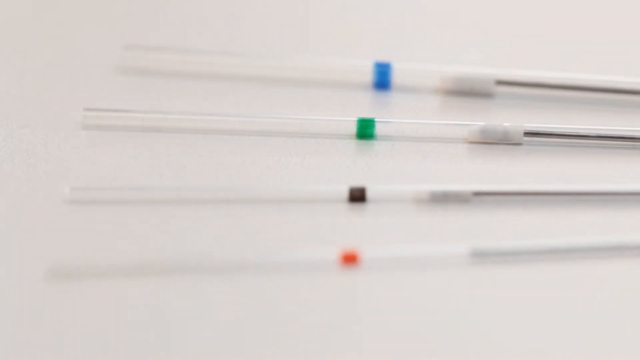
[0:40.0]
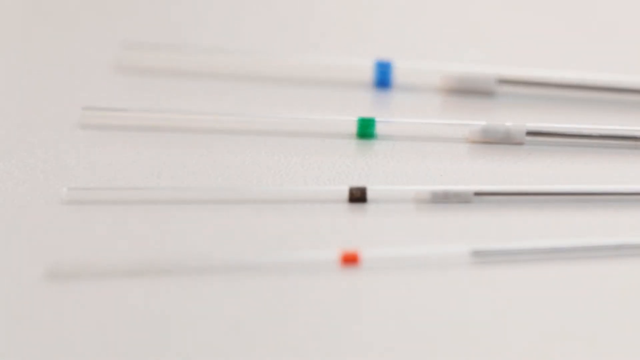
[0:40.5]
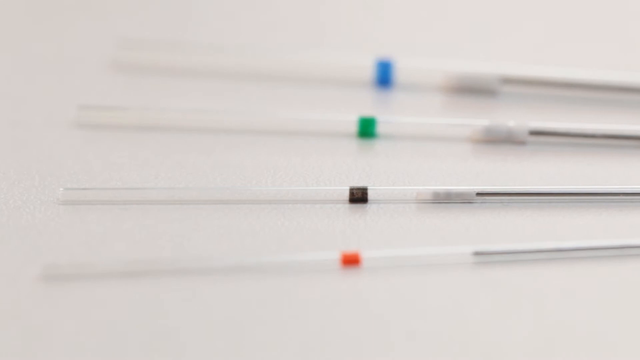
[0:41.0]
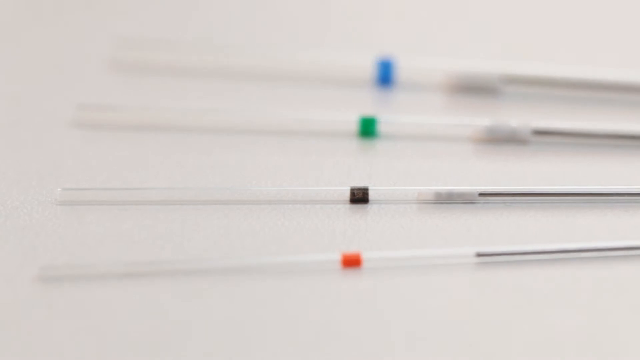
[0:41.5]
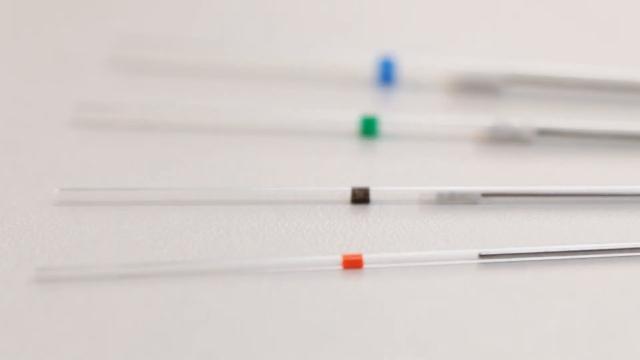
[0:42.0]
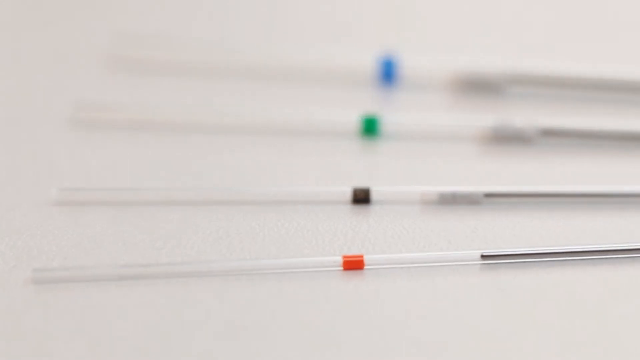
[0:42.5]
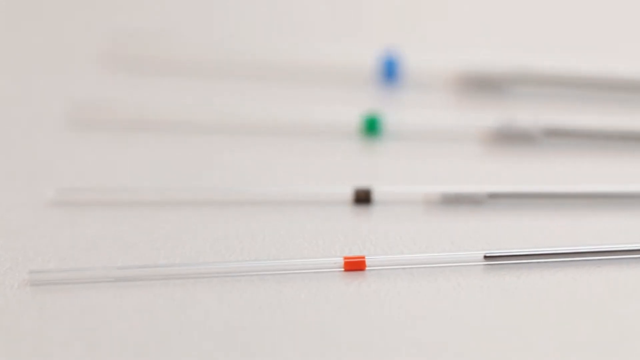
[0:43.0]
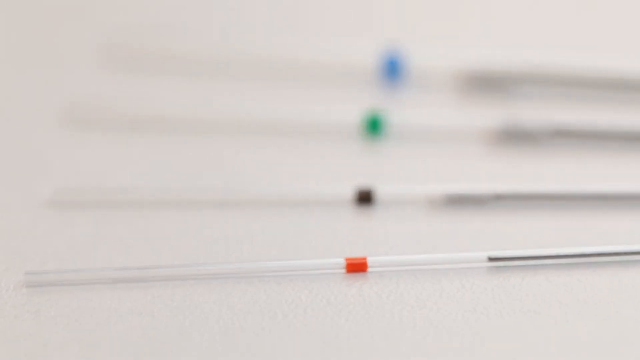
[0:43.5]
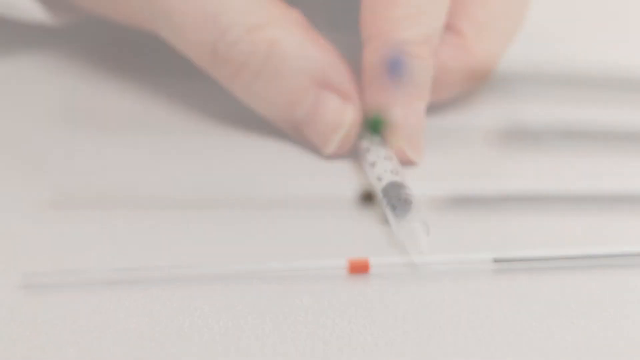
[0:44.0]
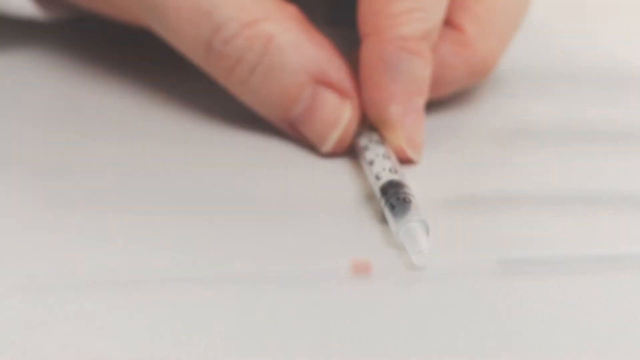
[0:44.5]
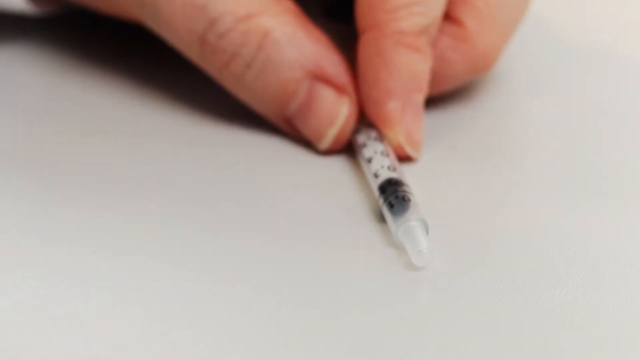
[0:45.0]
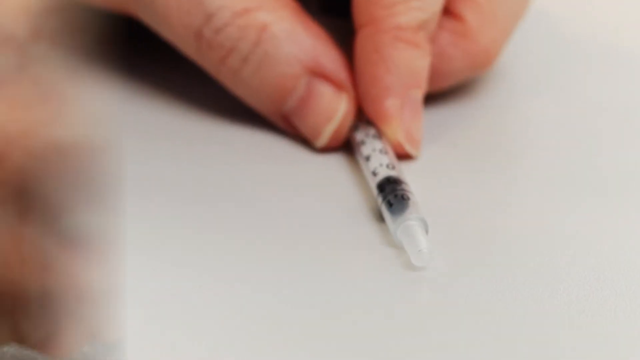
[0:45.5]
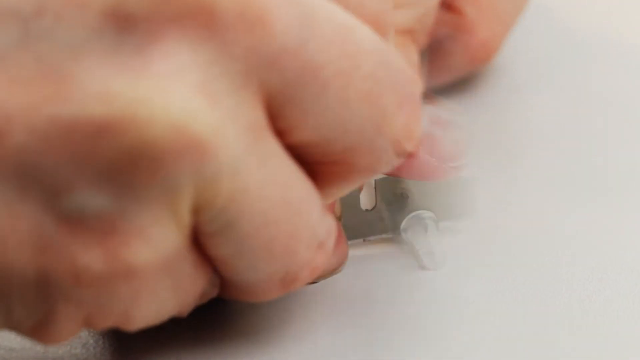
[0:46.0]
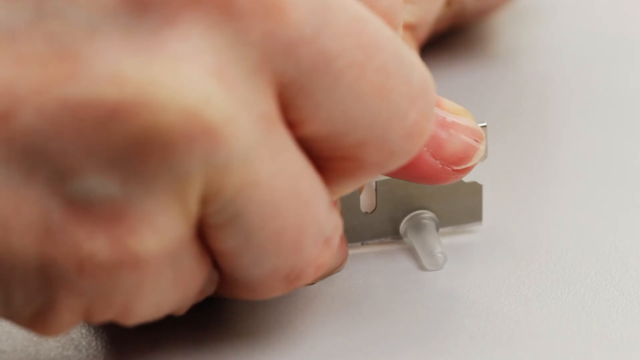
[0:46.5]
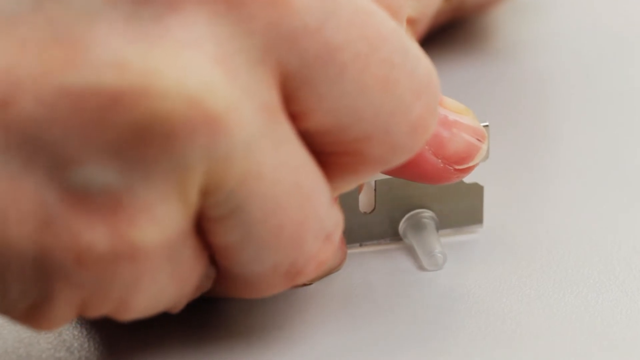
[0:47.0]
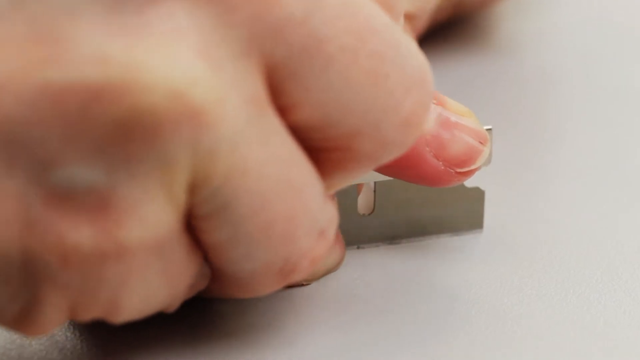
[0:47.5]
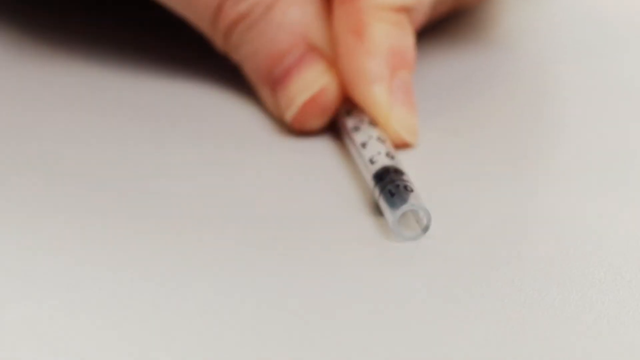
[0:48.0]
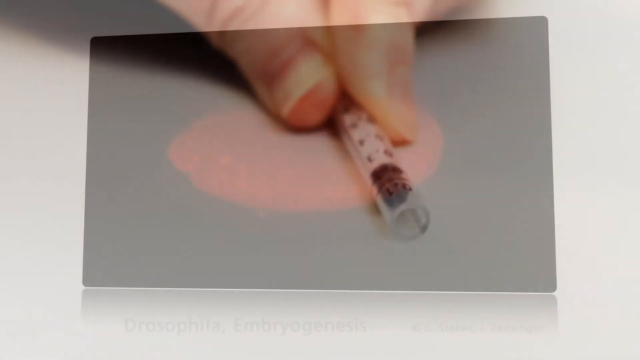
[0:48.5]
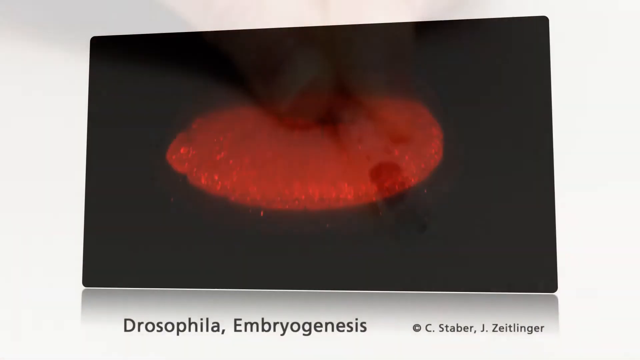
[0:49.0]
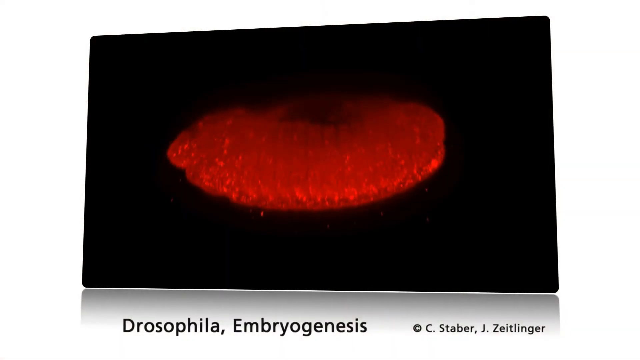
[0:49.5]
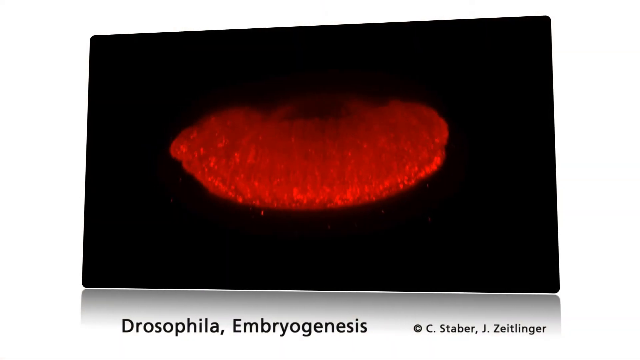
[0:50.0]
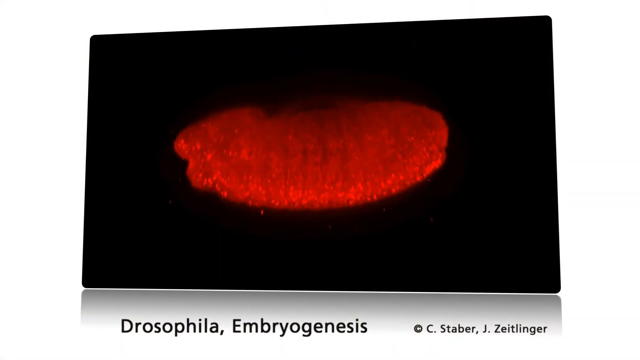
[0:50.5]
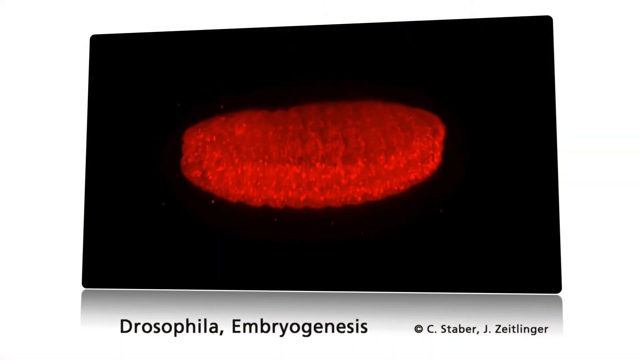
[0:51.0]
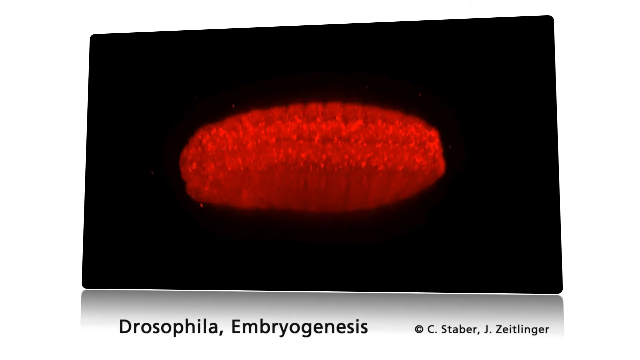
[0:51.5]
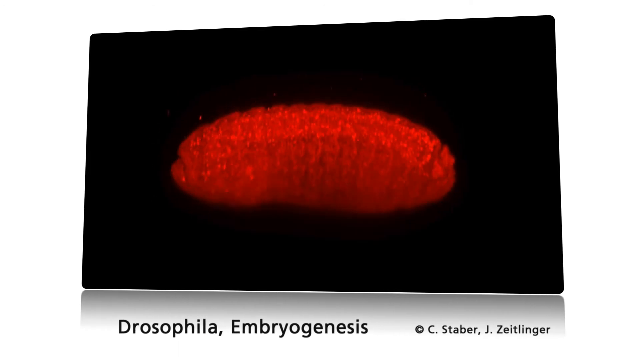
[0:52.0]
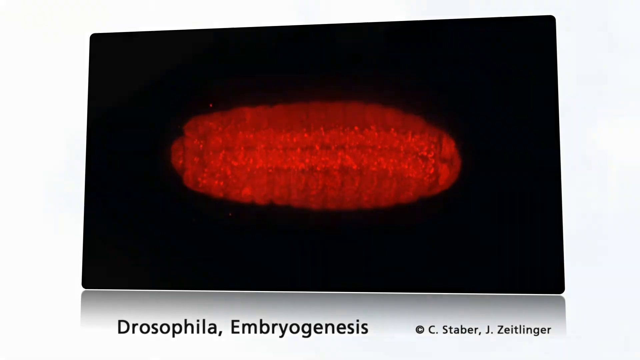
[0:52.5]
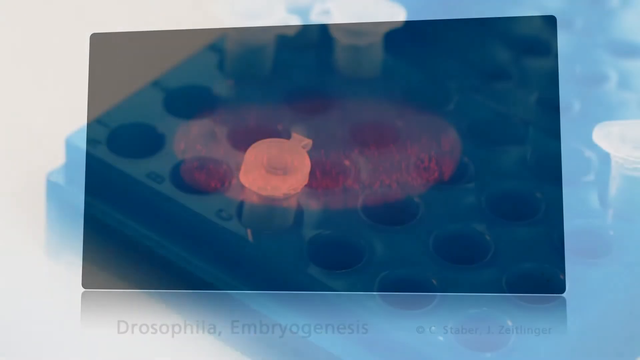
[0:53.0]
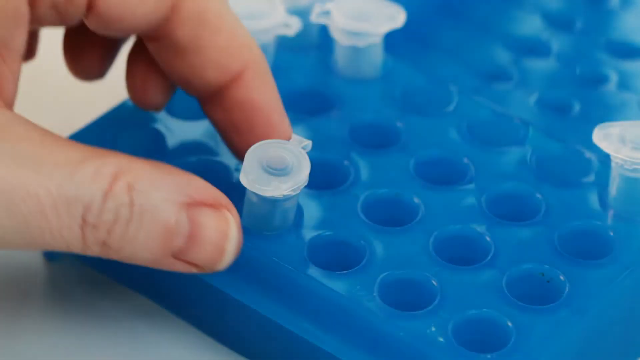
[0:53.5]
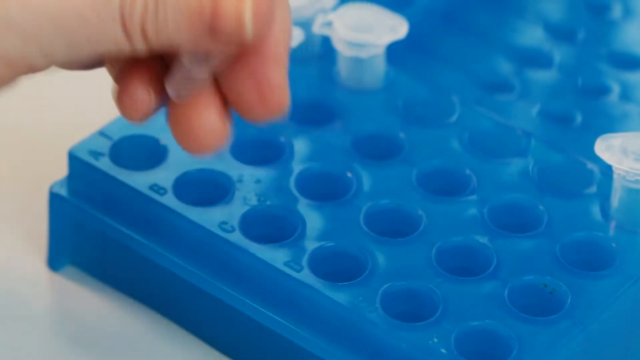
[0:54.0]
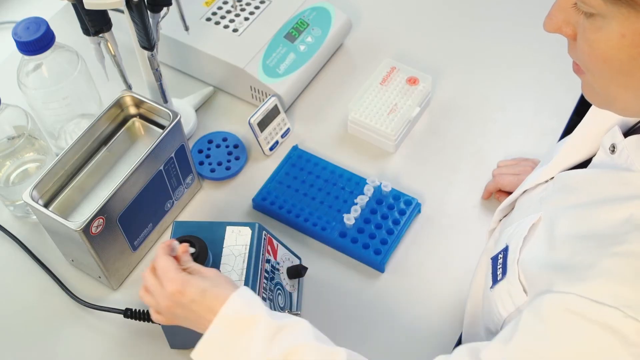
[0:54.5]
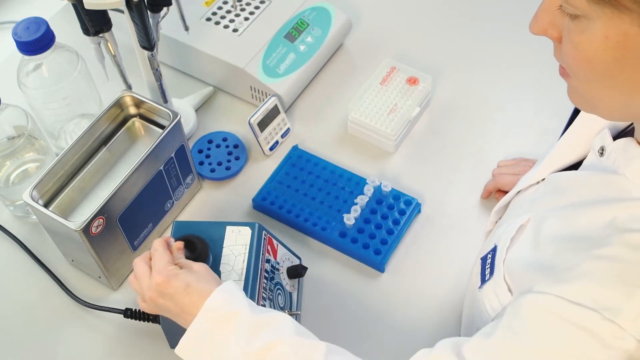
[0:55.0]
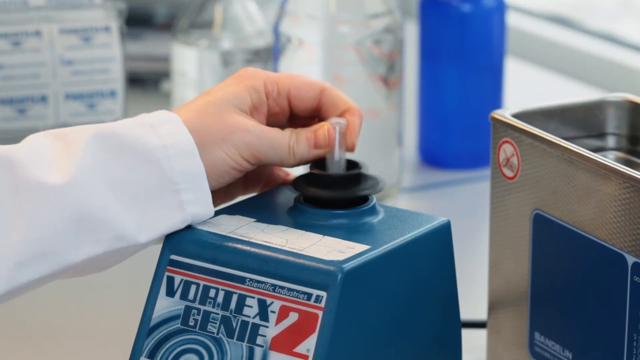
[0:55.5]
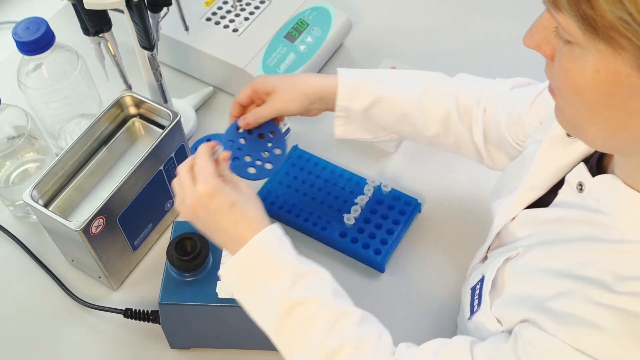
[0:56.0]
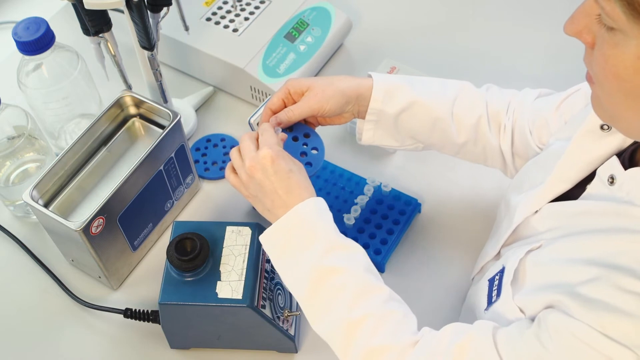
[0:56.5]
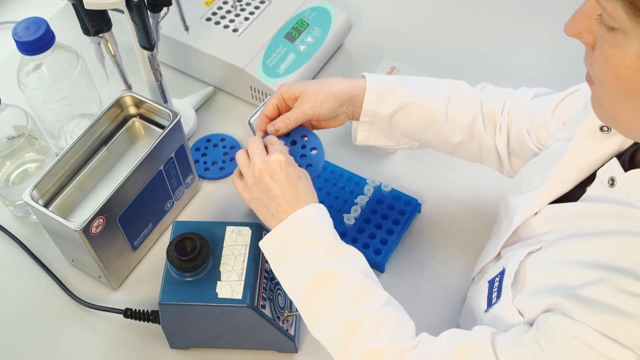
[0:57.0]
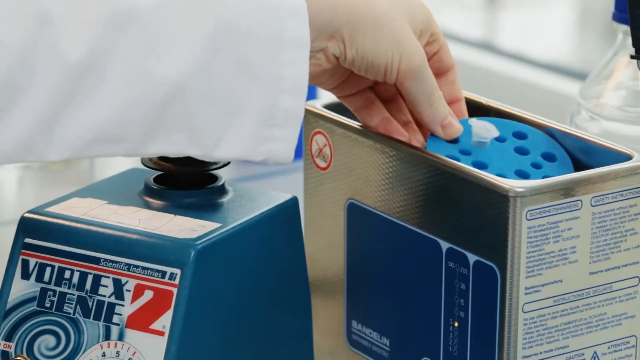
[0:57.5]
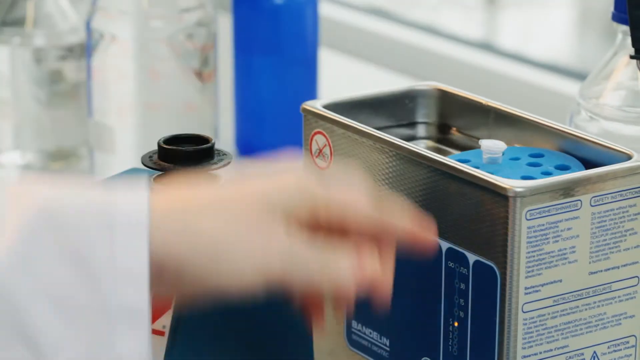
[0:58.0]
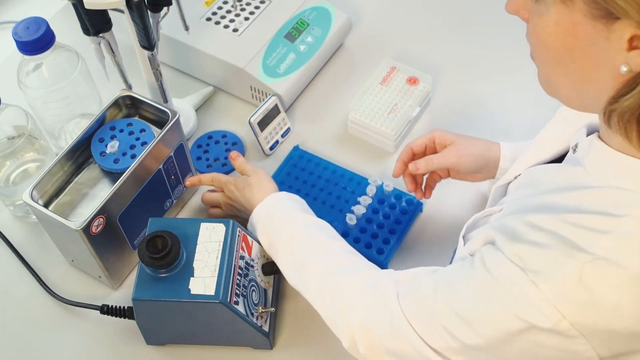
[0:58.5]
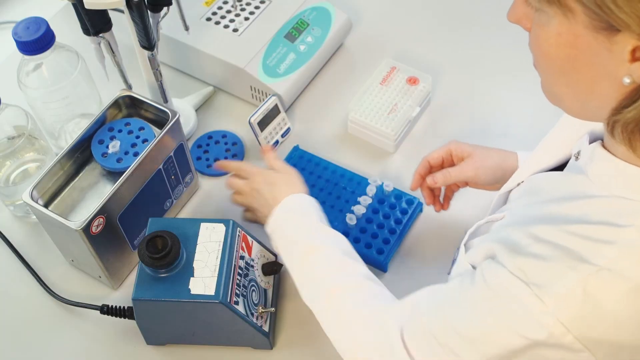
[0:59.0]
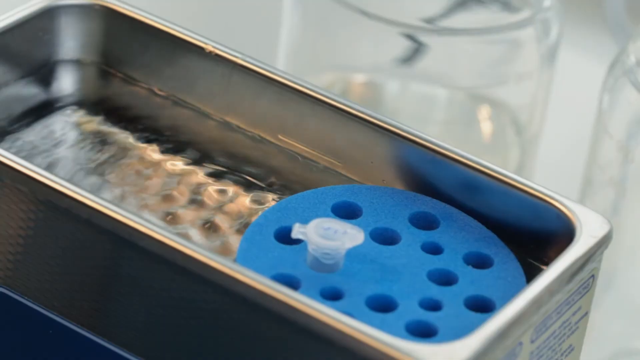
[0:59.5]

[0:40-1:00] The four thin tubes lie on the table as the camera slowly zooms in. The video transitions to a white table; at the top of the screen, fingertips hold one of the white tubes, which faces vertically, while the four tubes with the colored stripes are faintly visible and very out of focus. They disappear, leaving only the hand holding the one circular tube. A very zoomed-in close-up shows the knuckles of the person's right hand and one fingertip; they hold what looks to be a razor and appear almost to be cutting the tip off part of the tube. Next, a black background shows a long, oval-shaped red item moving in a circular format. Back in the lab, somebody's left hand and part of their white lab coat are visible; the hand holds the tube and is almost putting it into some kind of device with a hole in the center, labeled "vortex". There is a quick high overview of the scientist, then the shot of the vortex returns, followed by the high view from the ceiling looking down at the scientist working on whatever is in the clear, slim tube.